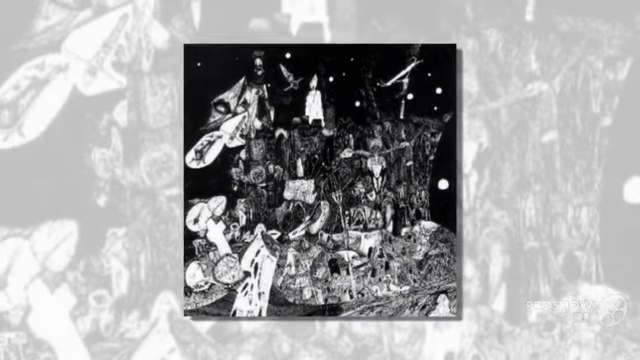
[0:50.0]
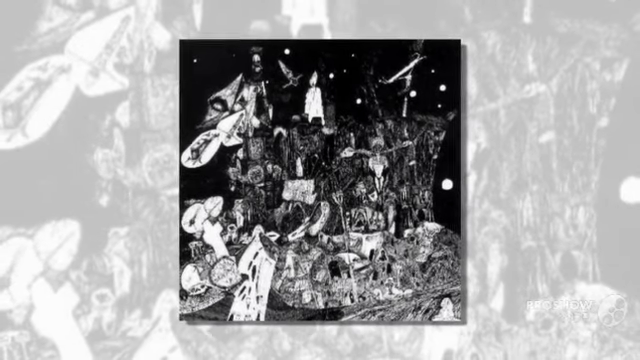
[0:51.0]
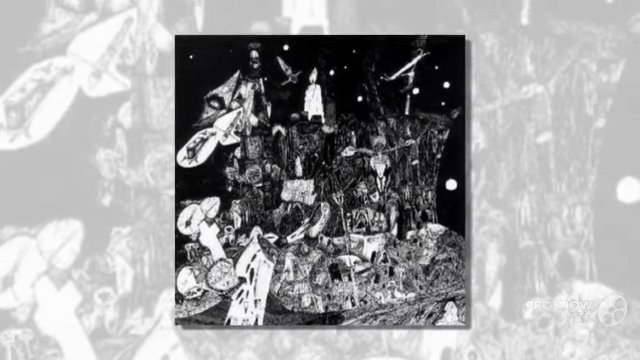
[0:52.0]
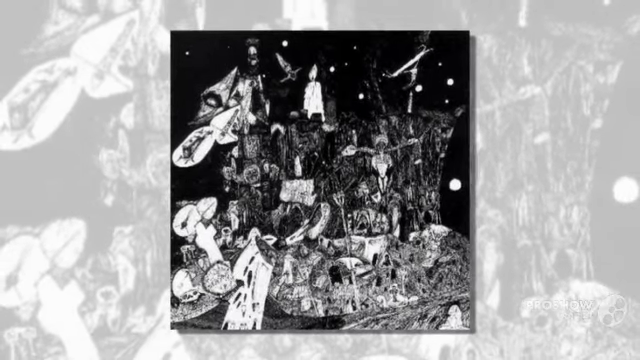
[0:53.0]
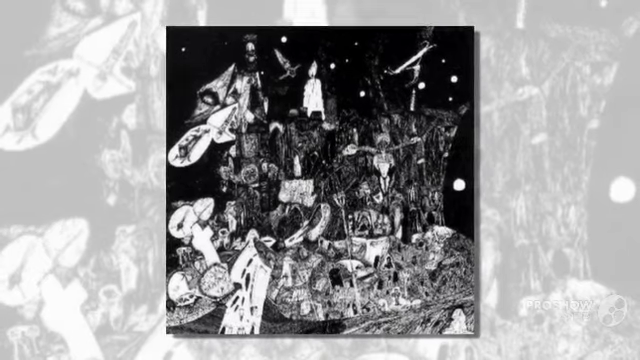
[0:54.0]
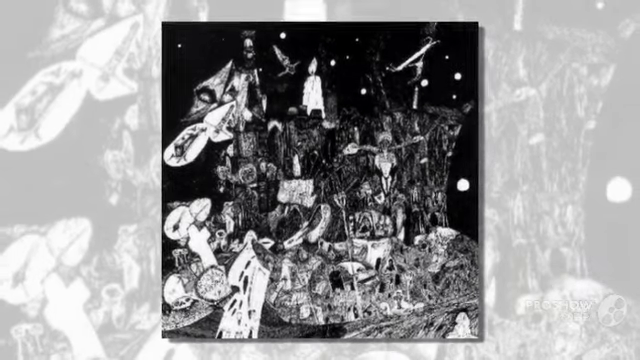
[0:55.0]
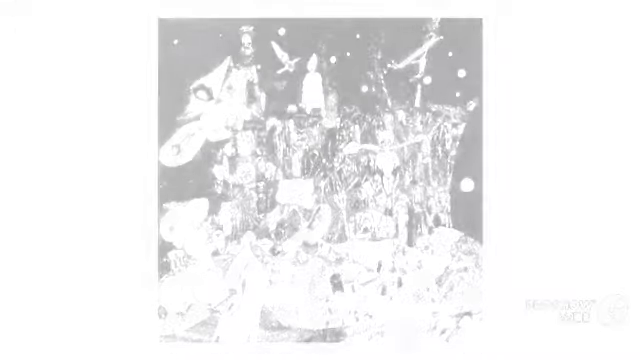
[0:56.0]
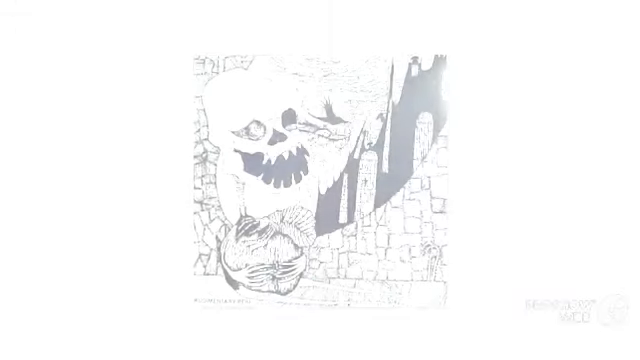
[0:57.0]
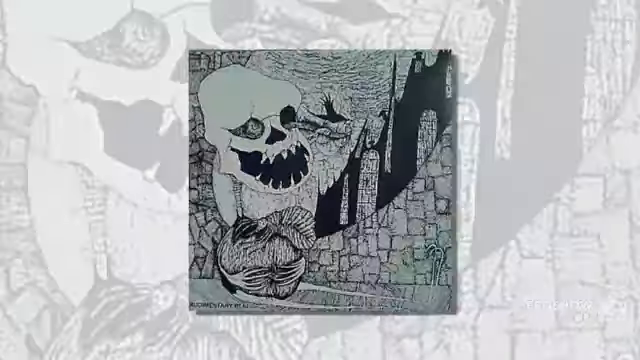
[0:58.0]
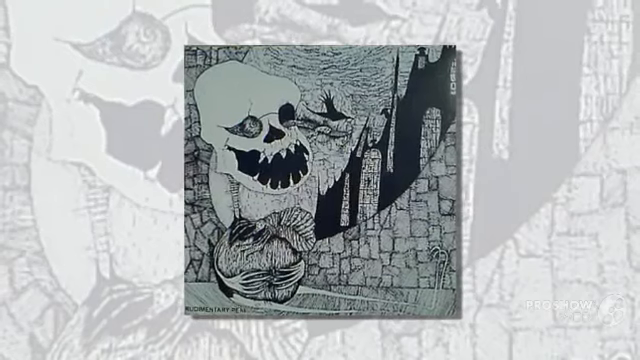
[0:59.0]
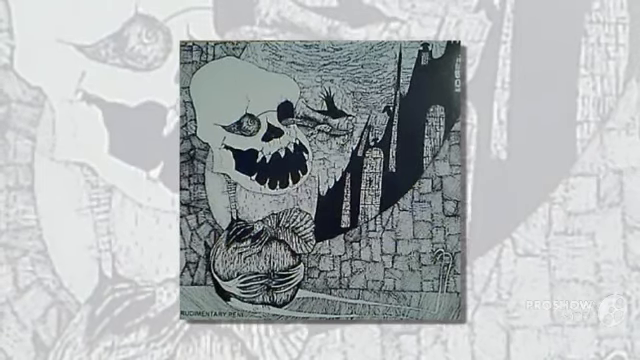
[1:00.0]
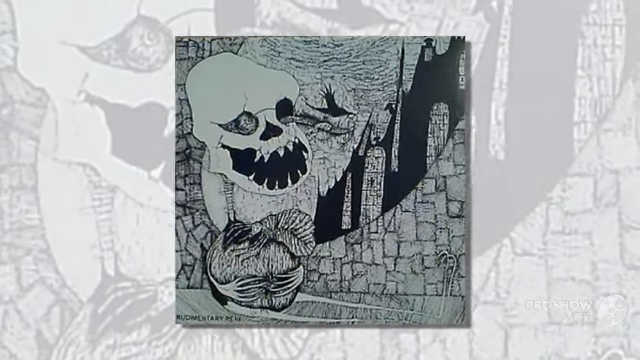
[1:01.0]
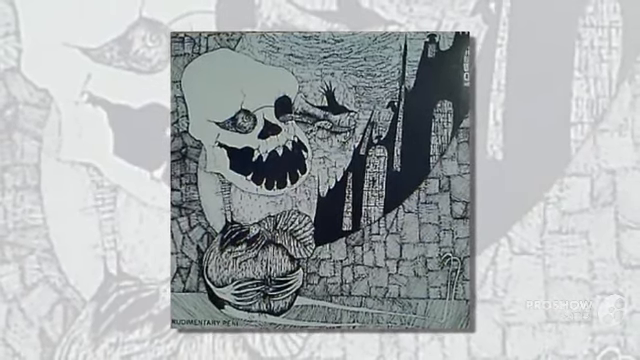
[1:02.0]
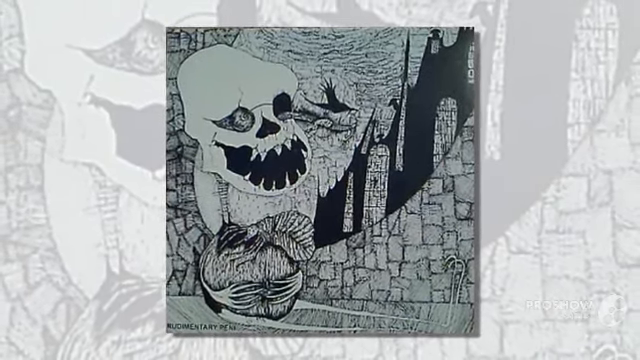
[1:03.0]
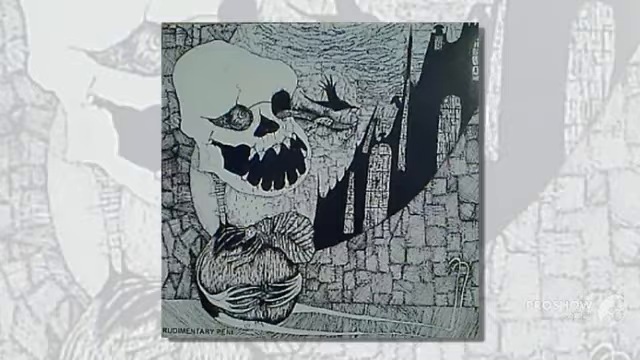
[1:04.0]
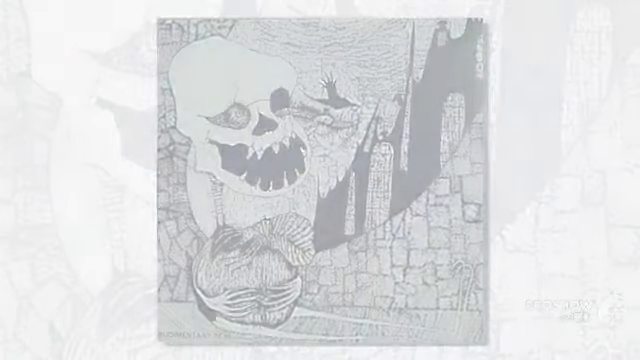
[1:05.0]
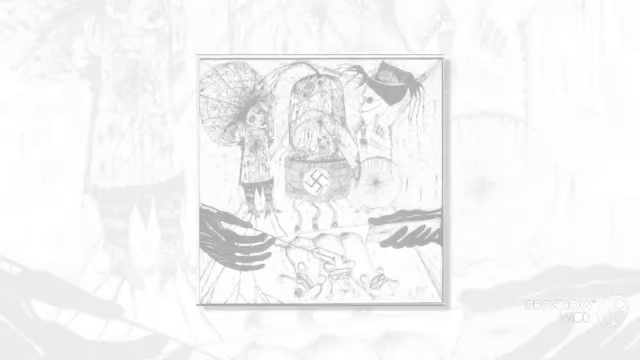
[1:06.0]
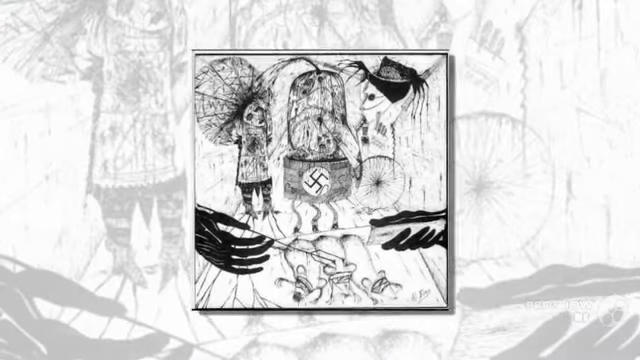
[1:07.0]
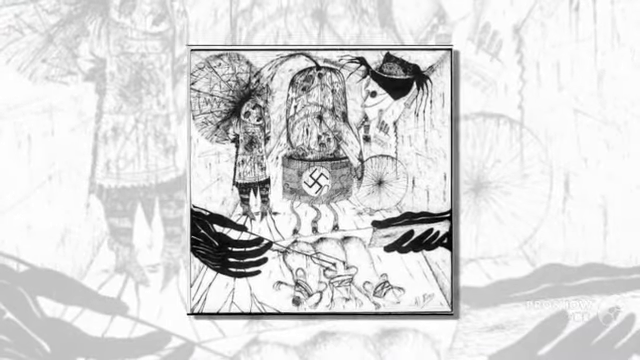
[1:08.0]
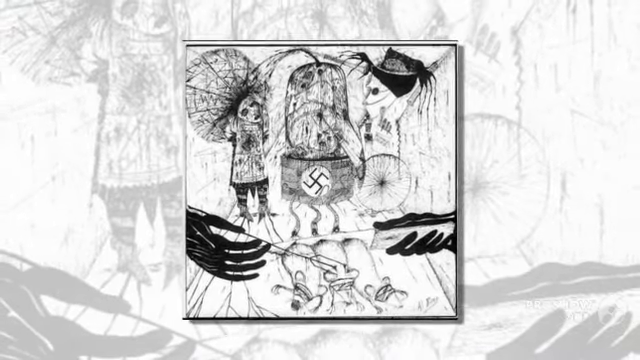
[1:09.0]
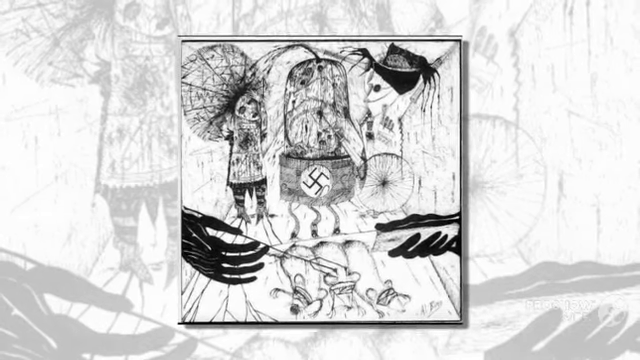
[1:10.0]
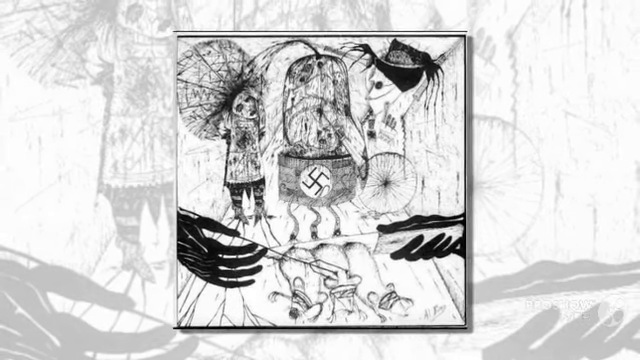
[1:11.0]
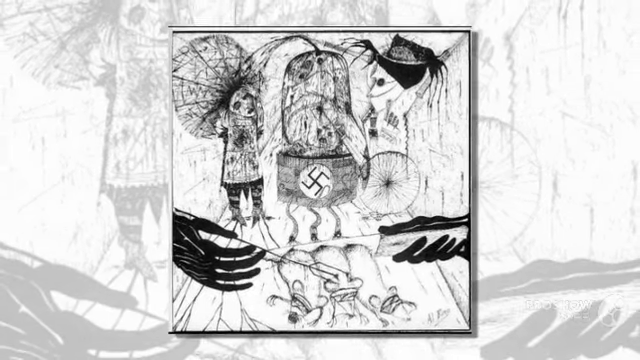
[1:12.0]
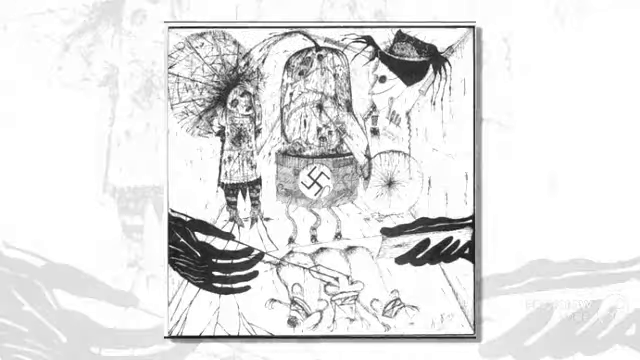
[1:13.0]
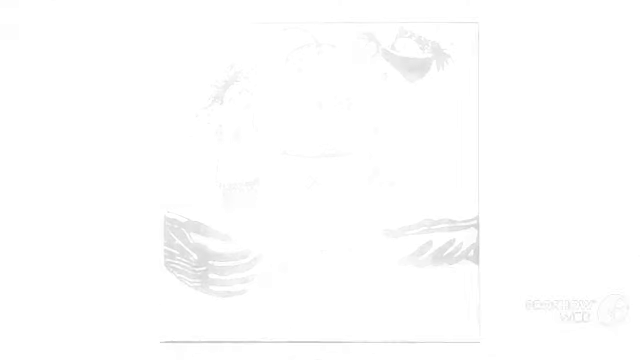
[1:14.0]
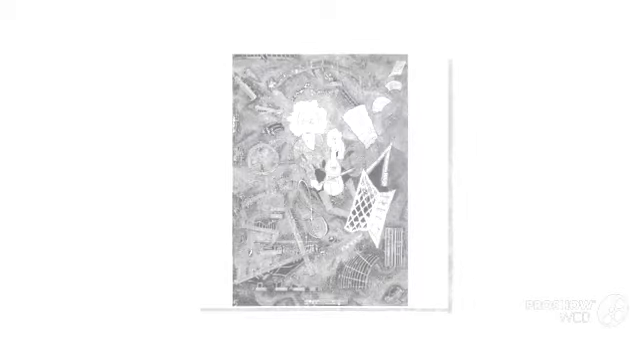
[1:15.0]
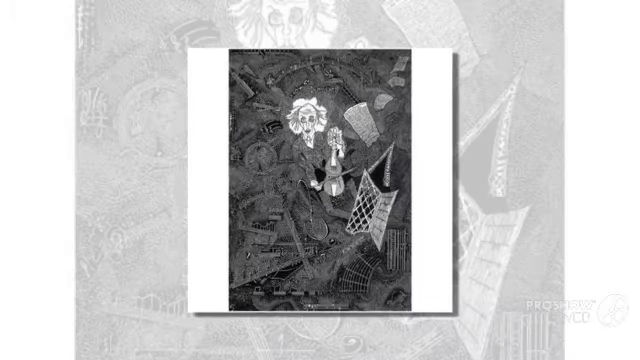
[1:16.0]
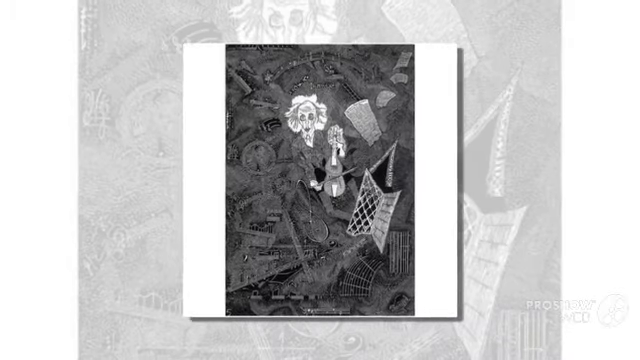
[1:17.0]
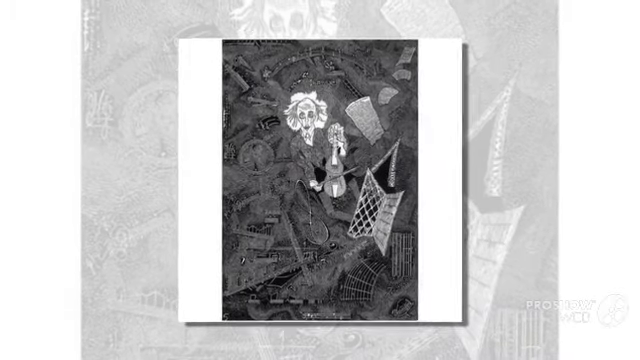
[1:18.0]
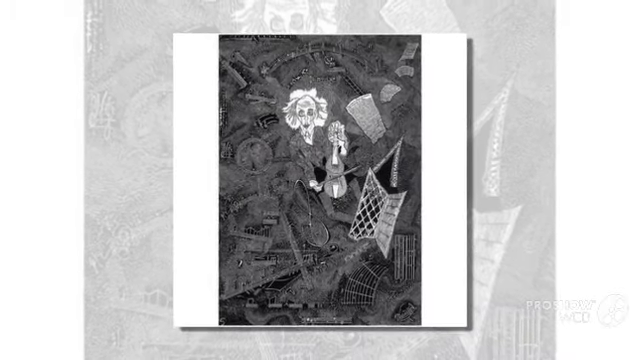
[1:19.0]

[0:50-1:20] Another picture appears, seemingly a wider shot. It seems to show a white cloaked figure standing on top of a bunch of black rocks with figures stuck in the rocks. To its left is a demon creature with a big kite or some sort of object that has human figures flattened onto it. At the bottom, the rocks look like they are floating along a body of water, or on top of a boat on a body of water, and the boat seems to be a mix of the rocks and a bunch of other things. The image then switches to a picture of a skull face looking to the right, sort of happy. It has one eyeball in its skull; the other eyeball seems to be missing, and there is something like a worm in that socket, with what looks like a black bird outline just above the worm. The skull seems to still have its spine and is sort of sitting against a wall. It has very big clawed hands holding some big ball, and it is looking at a wall with black shadows inked onto it.